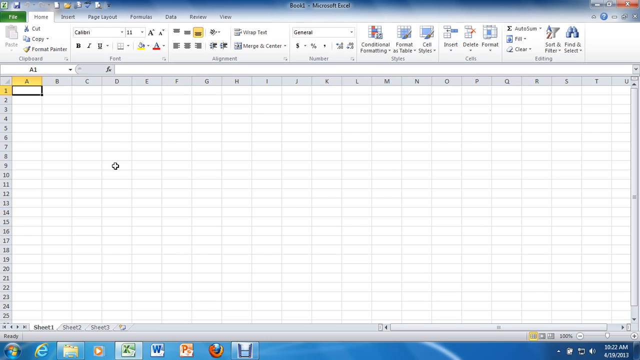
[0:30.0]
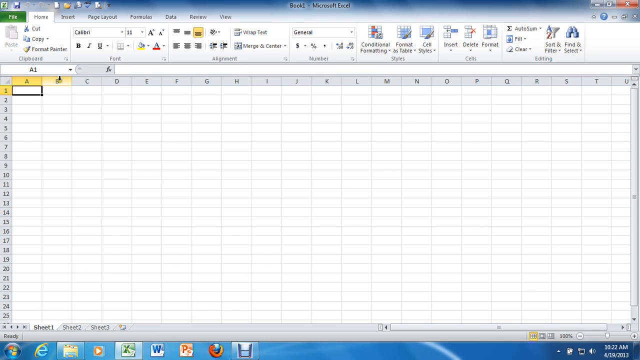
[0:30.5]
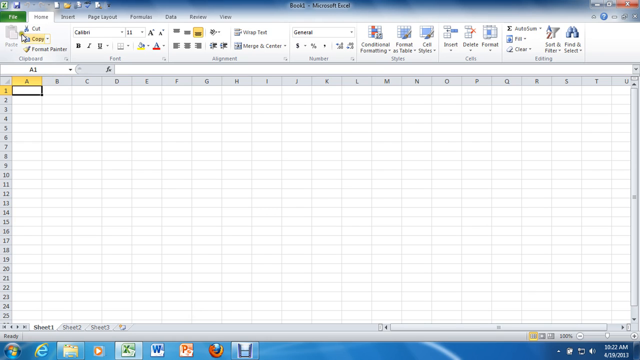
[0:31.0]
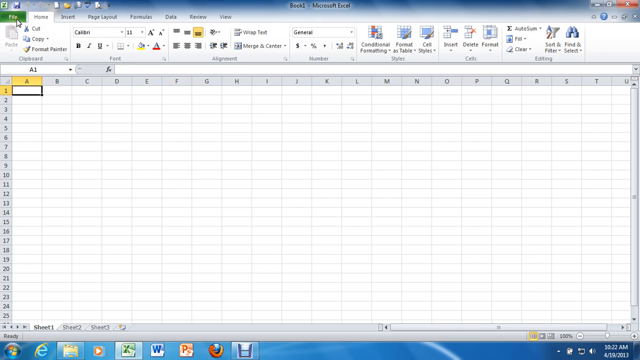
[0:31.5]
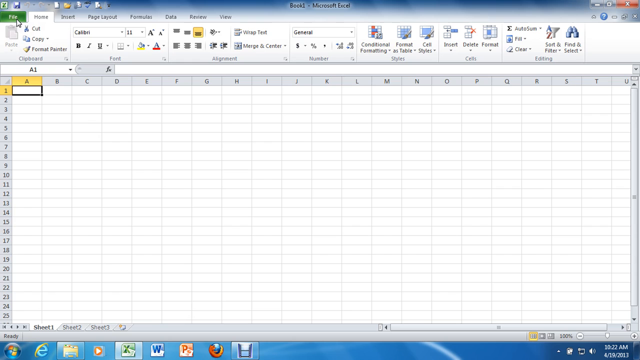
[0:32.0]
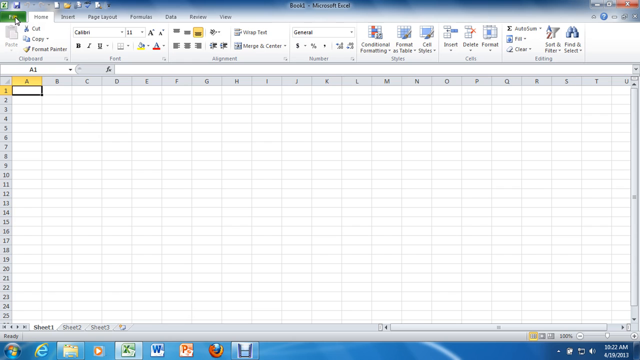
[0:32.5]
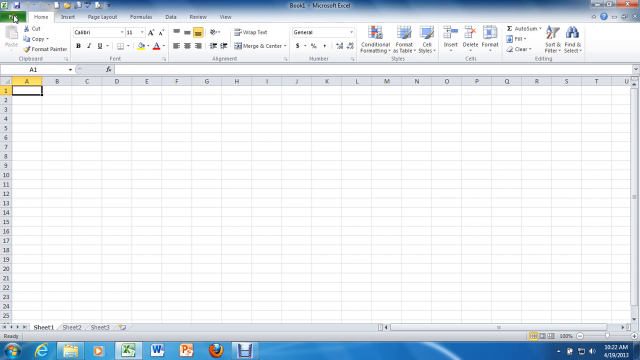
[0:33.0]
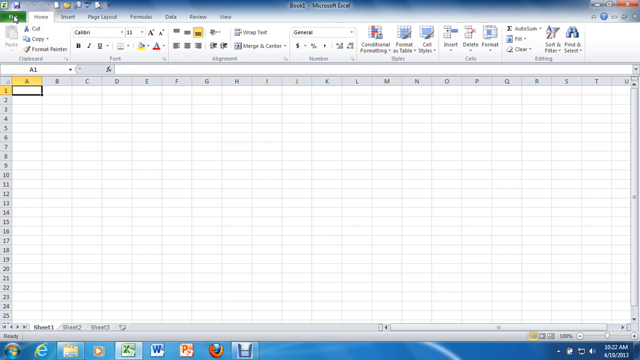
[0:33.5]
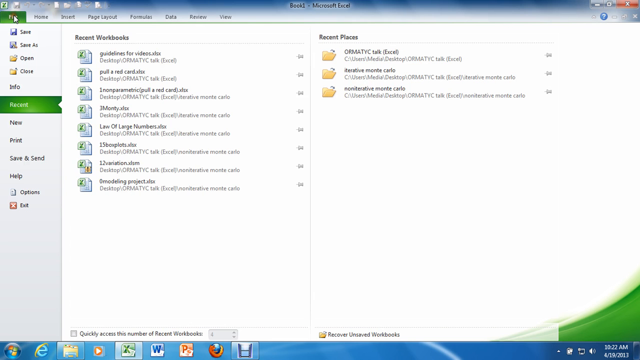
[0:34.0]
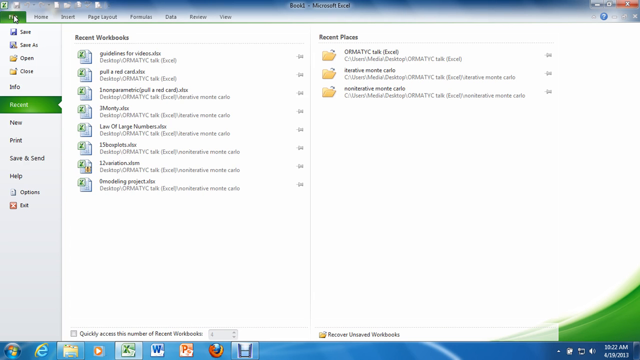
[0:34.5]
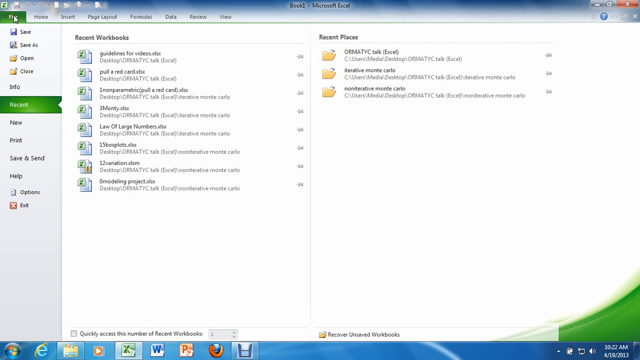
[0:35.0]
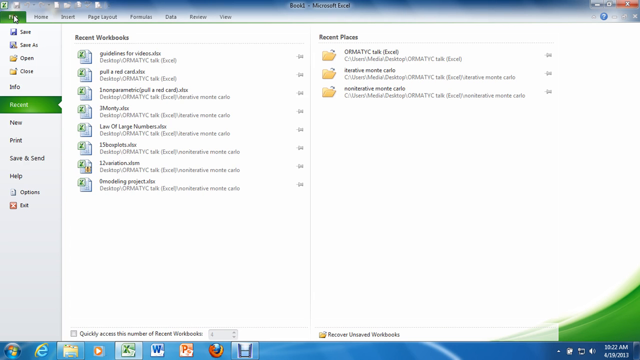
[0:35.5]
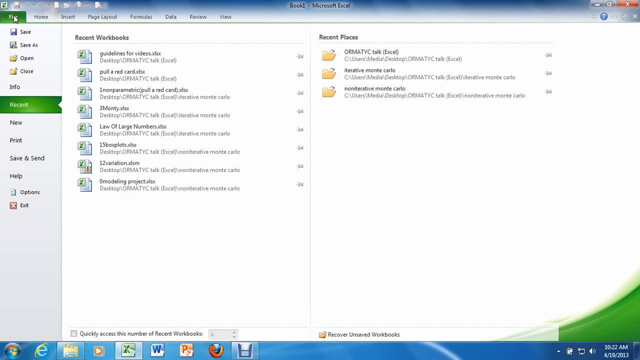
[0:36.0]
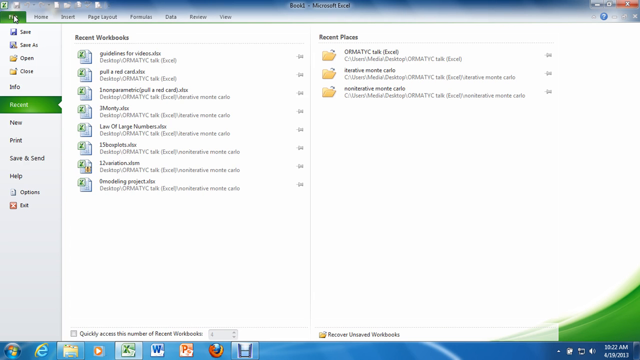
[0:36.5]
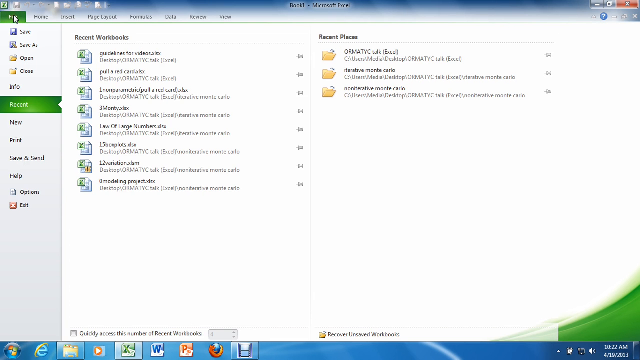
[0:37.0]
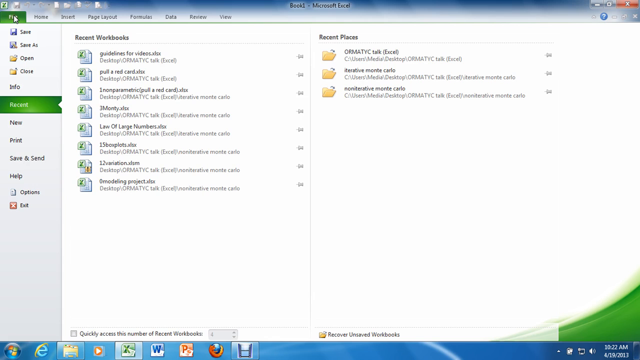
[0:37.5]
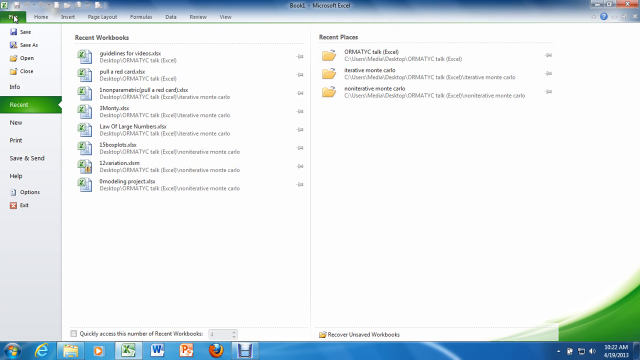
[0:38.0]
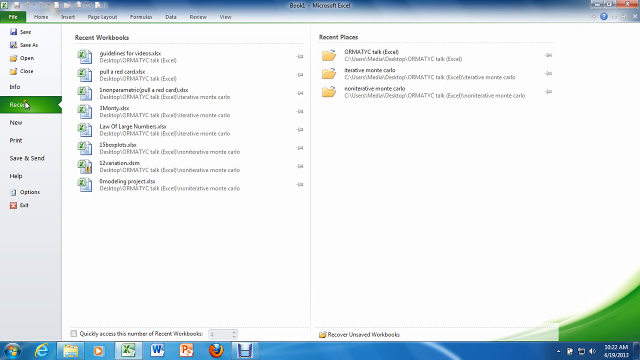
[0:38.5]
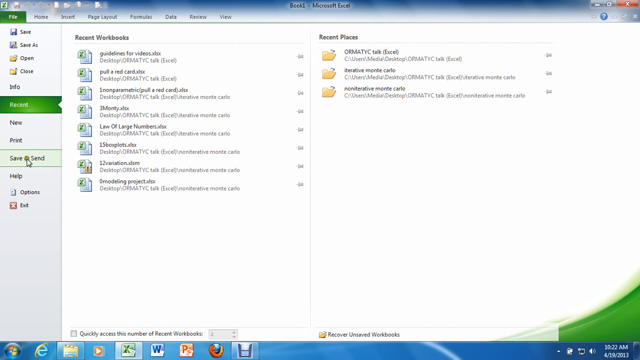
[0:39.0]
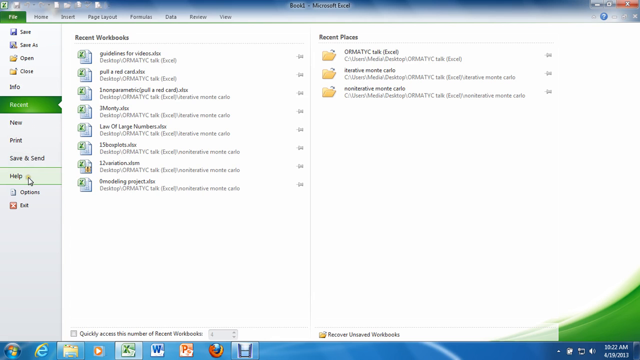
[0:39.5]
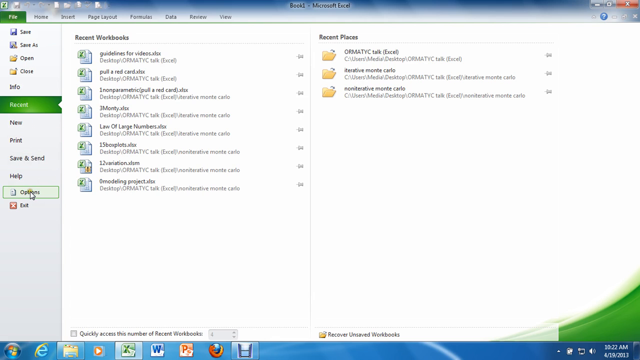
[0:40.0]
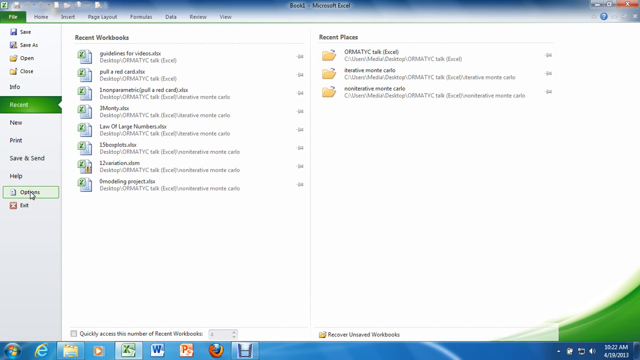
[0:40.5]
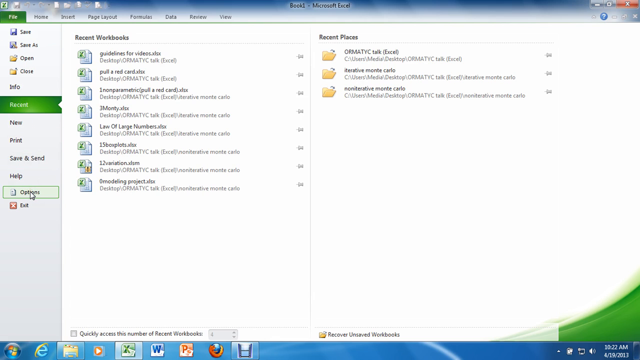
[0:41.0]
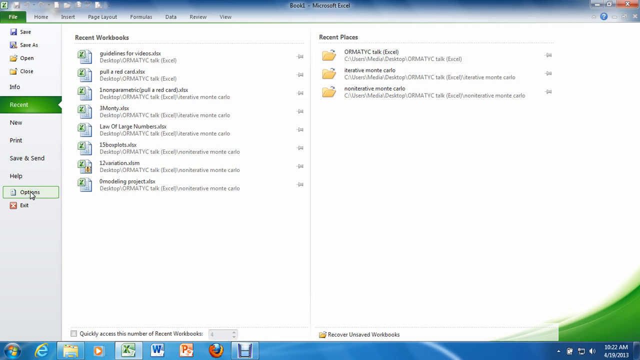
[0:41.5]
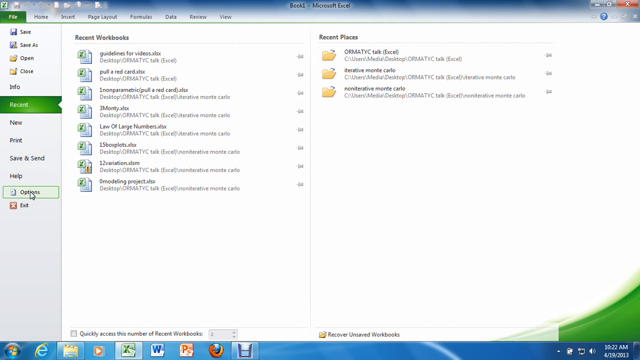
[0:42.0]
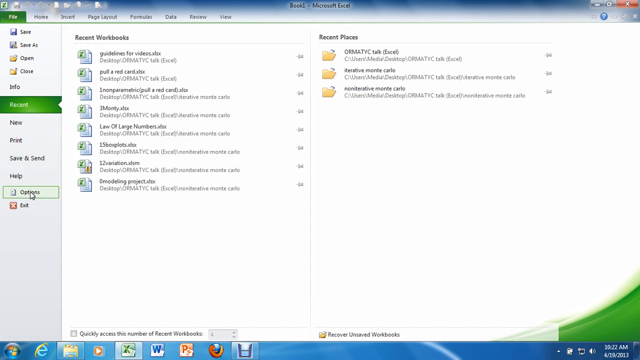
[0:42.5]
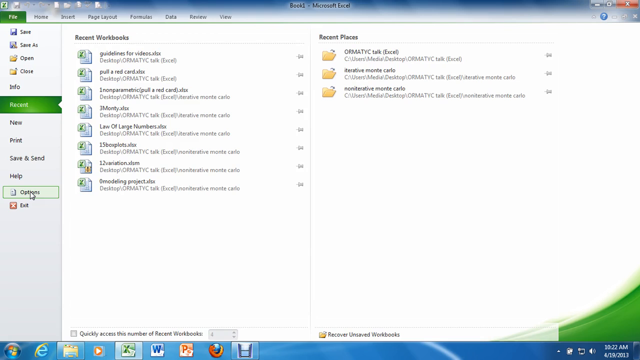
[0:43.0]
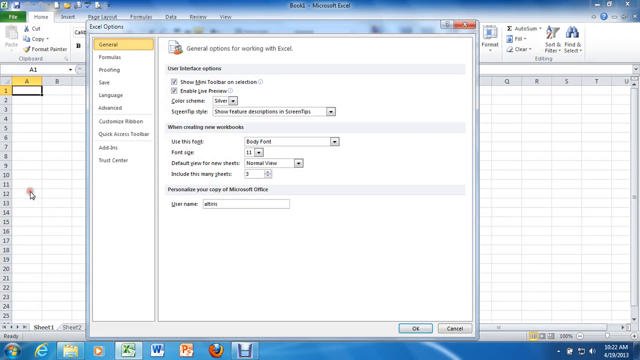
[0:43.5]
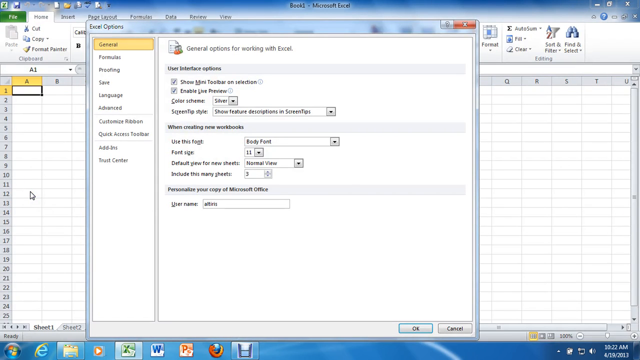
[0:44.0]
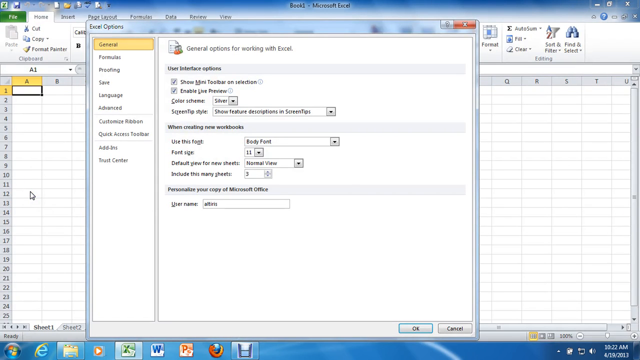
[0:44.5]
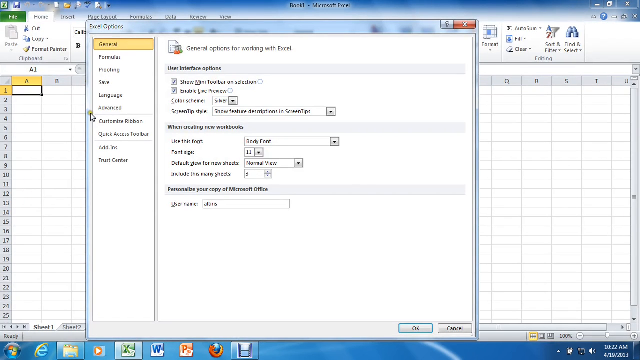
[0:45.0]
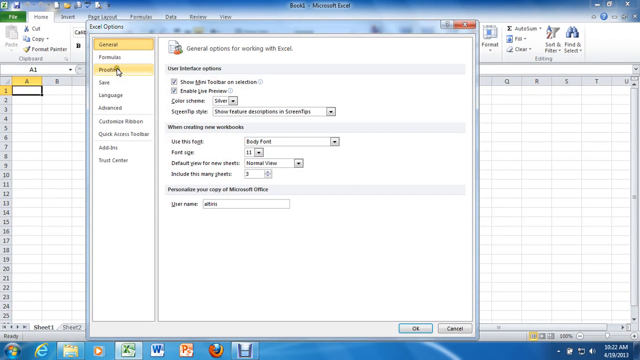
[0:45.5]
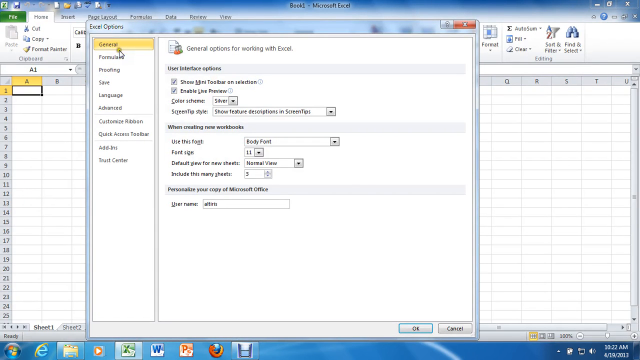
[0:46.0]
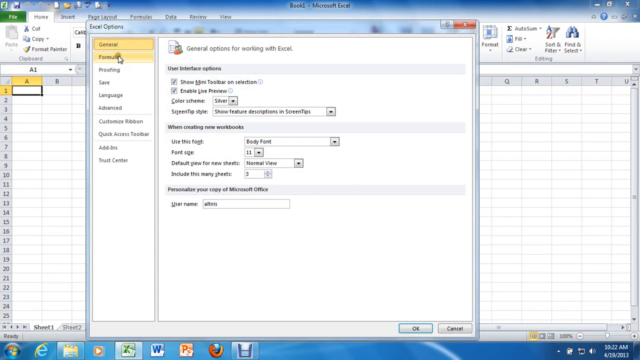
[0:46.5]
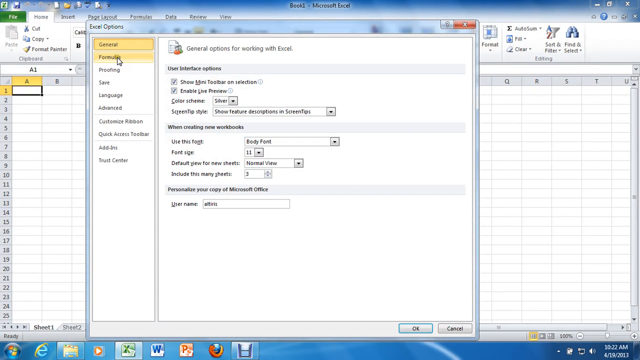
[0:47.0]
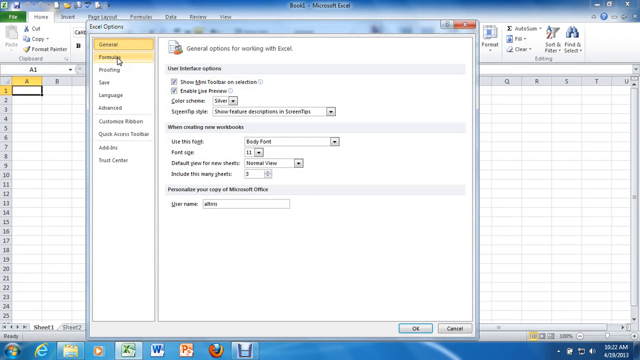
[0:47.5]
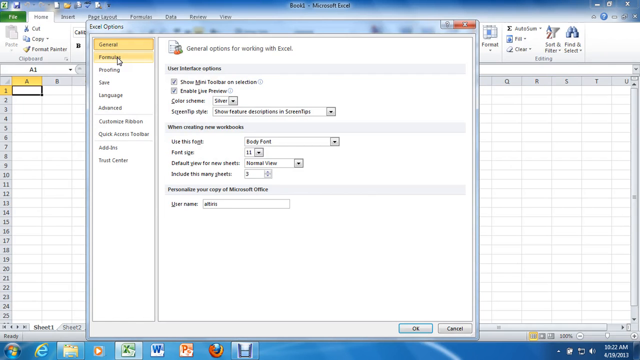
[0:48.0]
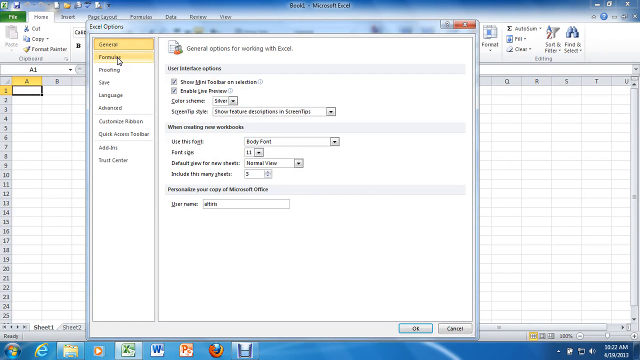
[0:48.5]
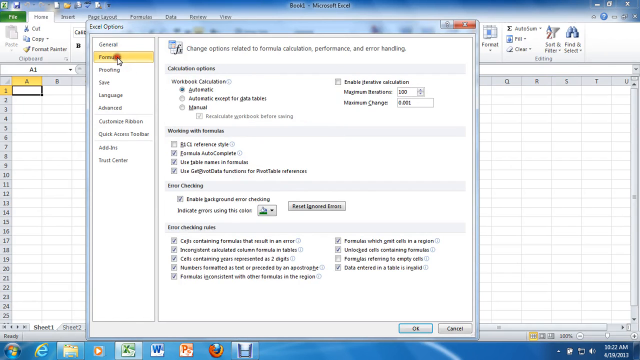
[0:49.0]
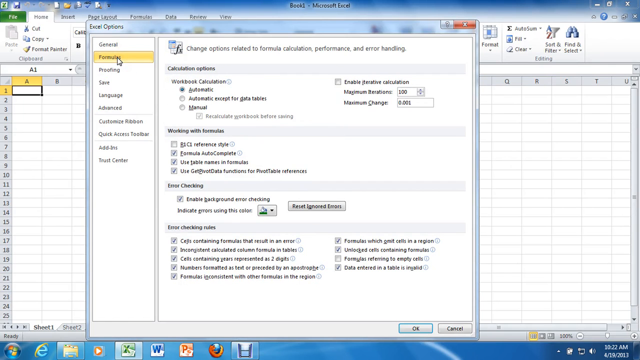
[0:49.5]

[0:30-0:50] The same empty page stays on screen for a while with nothing on it. Then he presses a green button at the top left that says "File", and Workbooks appears with a bunch of items listed, with Recent Places listed next to that, three of them, followed by General options for working with Excel. He moves through these, changes his options, and the view returns to the blank grid of lettered cells. The page has a lot of green on it and blue at the bottom. Text on it reads "General Formulas Proofing Save Language Advance" and "Quick Access Toolbar". The same yellow appears around the A cell with a black rectangle, and nothing is in it; the file is blank. The image is dark, the lighting is poor, and it is hard to see.